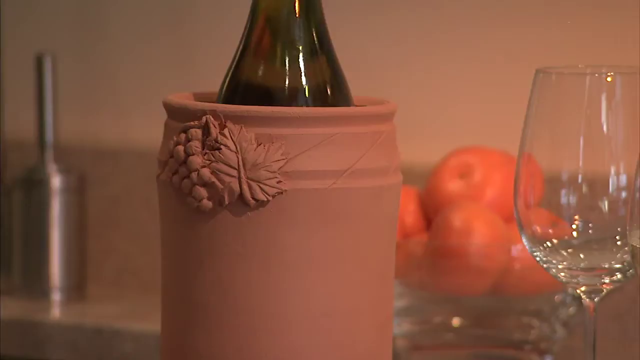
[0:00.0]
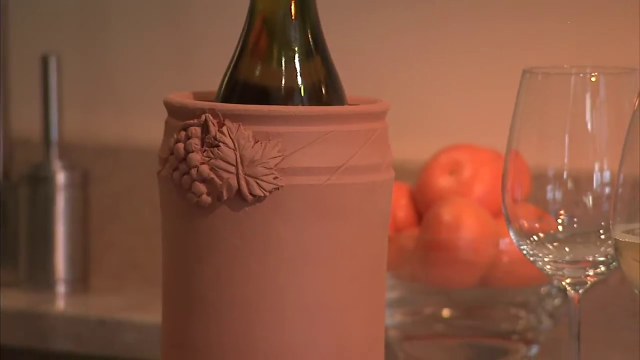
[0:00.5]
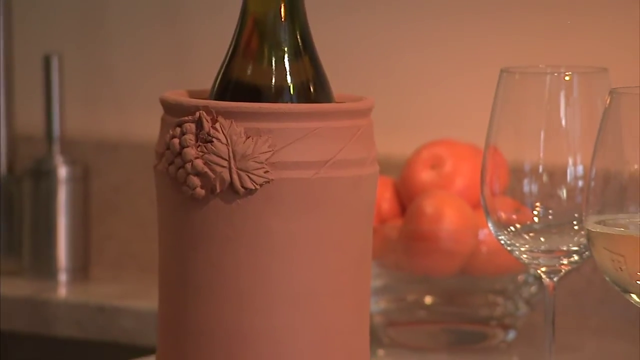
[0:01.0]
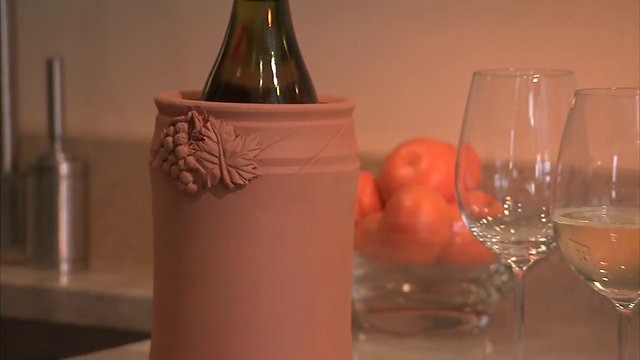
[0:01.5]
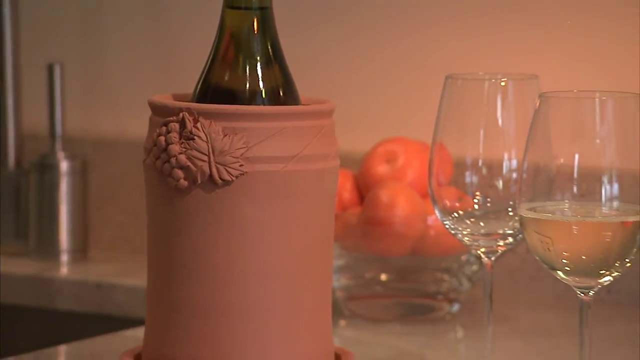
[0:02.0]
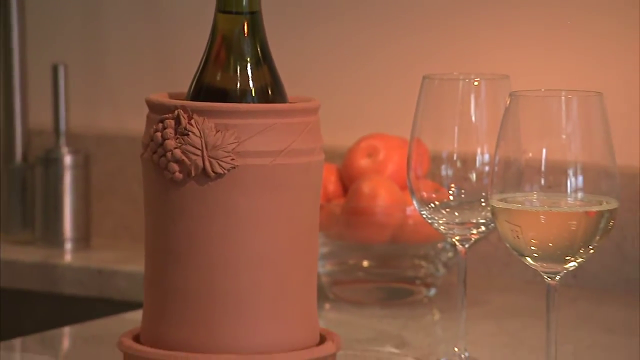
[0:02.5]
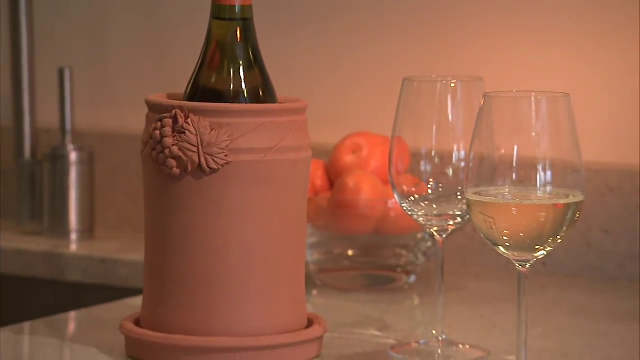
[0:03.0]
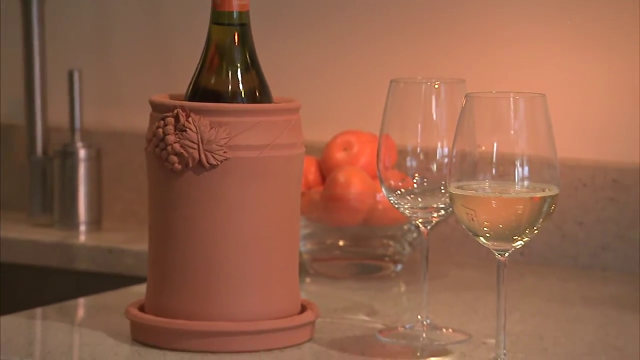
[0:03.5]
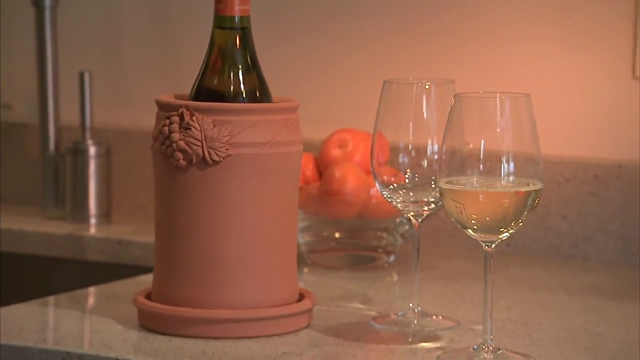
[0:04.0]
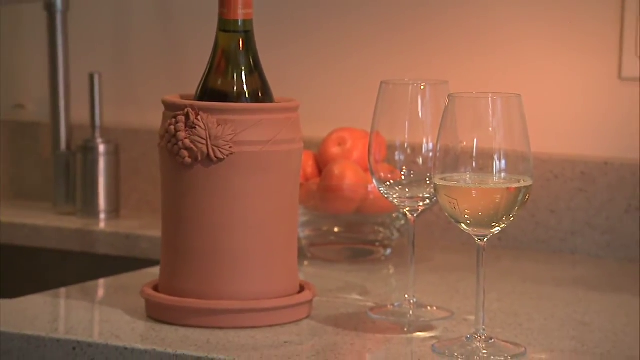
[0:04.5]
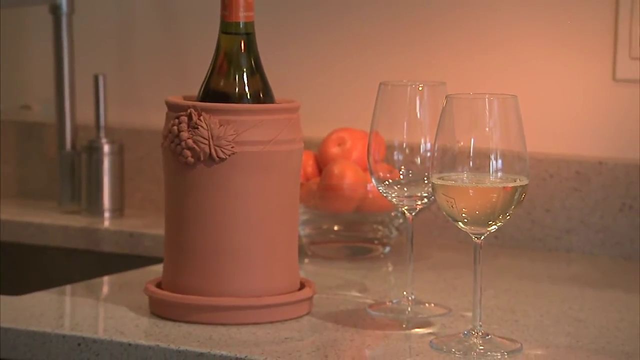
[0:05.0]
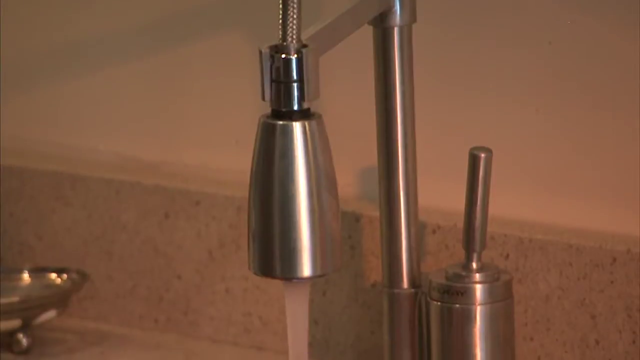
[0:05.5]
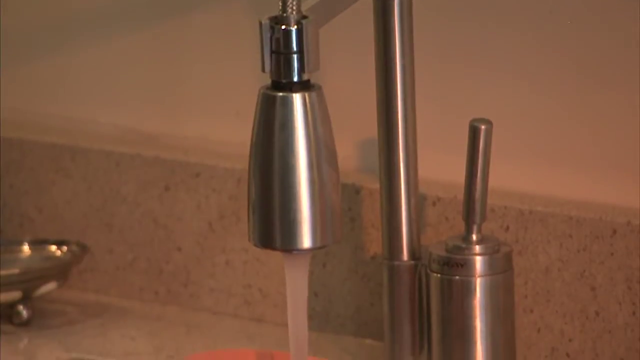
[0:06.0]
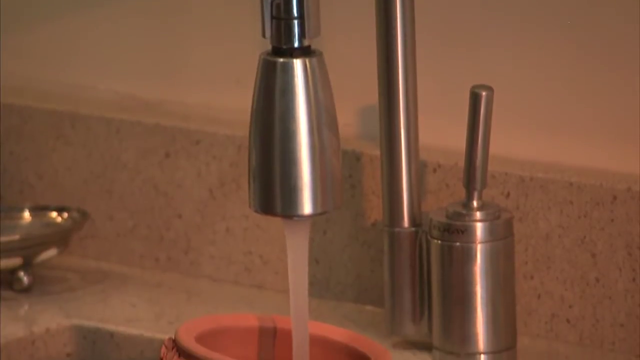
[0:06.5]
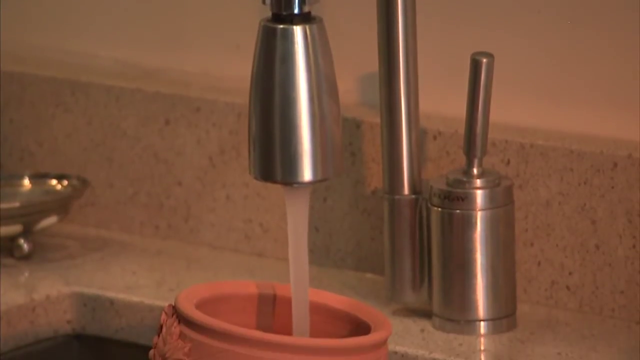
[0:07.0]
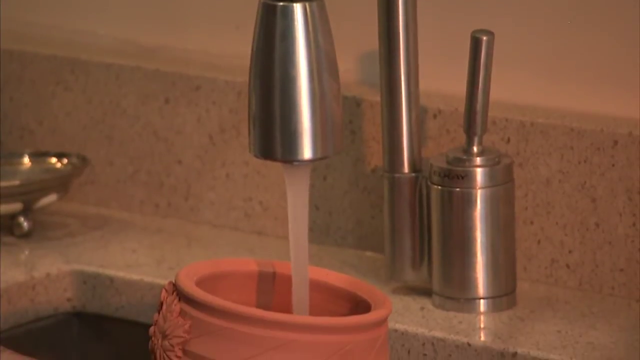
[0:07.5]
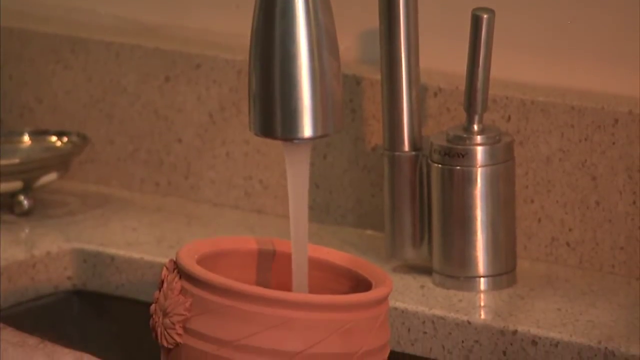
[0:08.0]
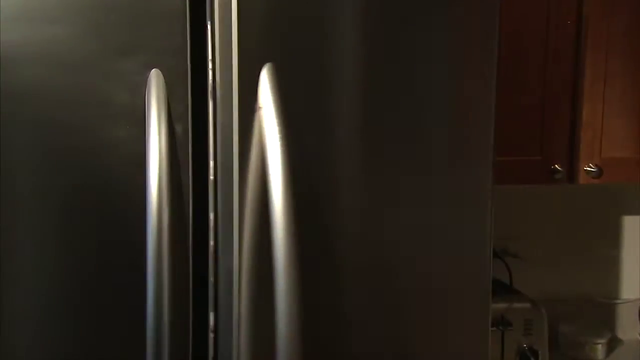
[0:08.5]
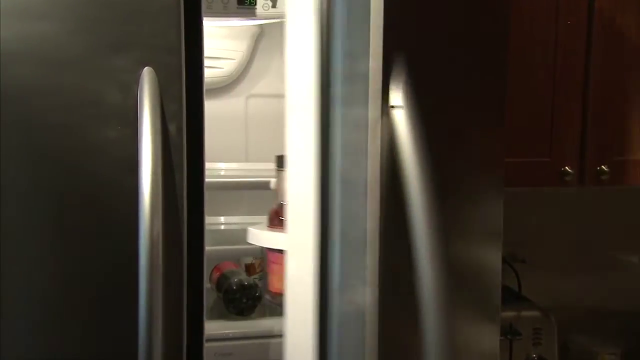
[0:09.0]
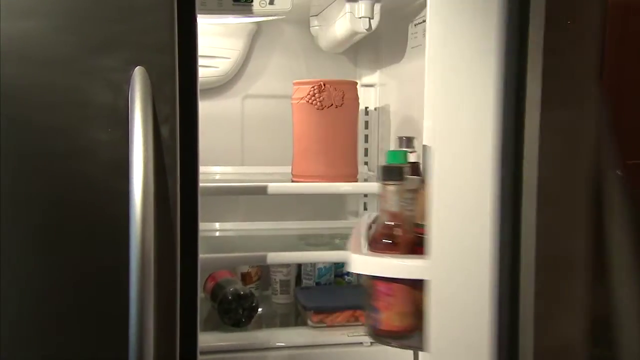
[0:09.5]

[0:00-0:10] The video opens on a wine glass on a table, along with a bowl holding some nectarines. There is a cooler with a wine bottle inside; the cooler is made of pottery and has a bunch of grapes with leaves designed on its side. The view zooms out to show two glasses on a table. At the back are two steel objects, which turn out to be a tap. As the tap opens, the pottery vase is filled with water. The fridge then opens and the pottery vase is placed inside, where it is left on the top shelf.